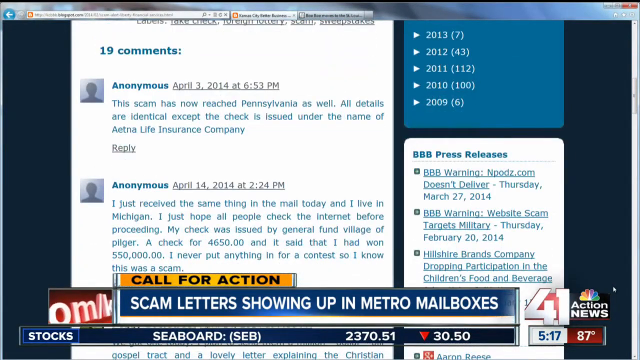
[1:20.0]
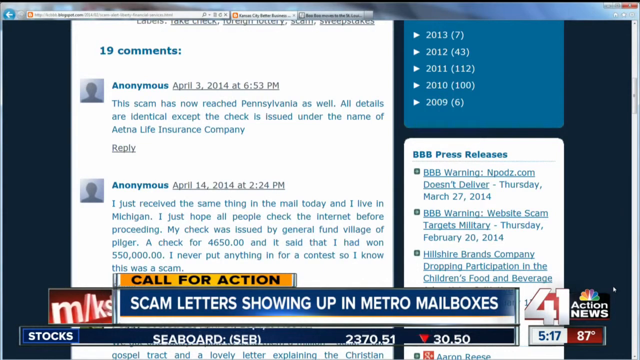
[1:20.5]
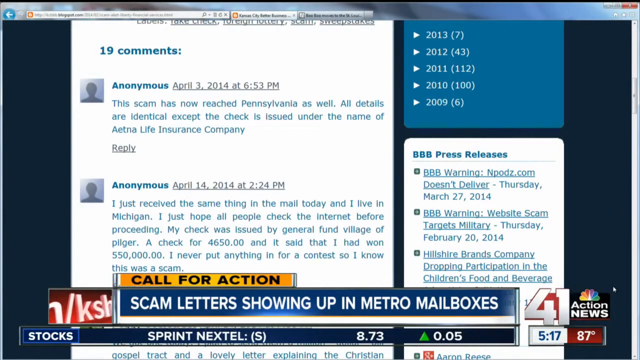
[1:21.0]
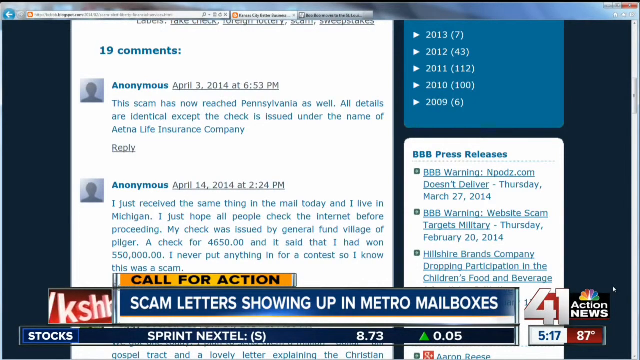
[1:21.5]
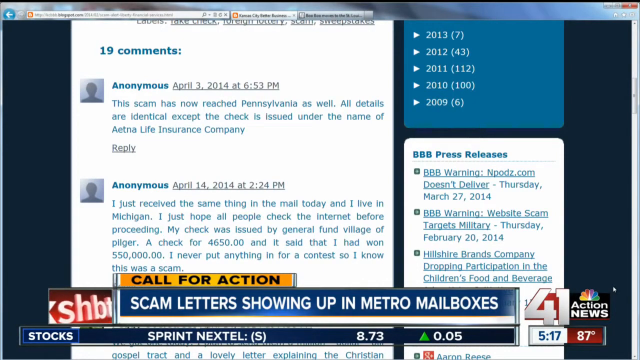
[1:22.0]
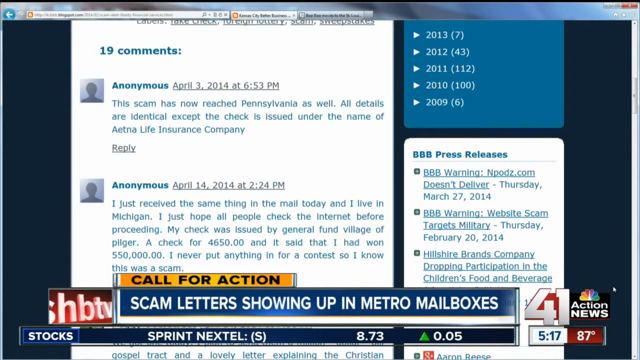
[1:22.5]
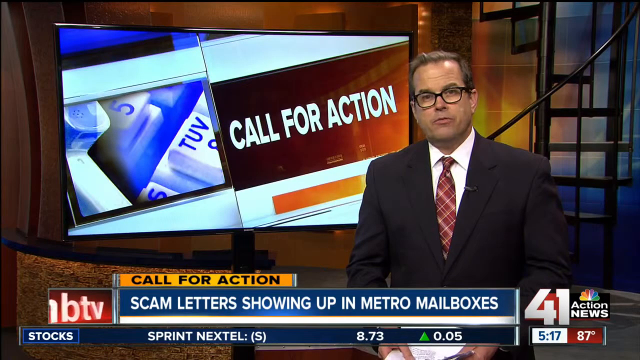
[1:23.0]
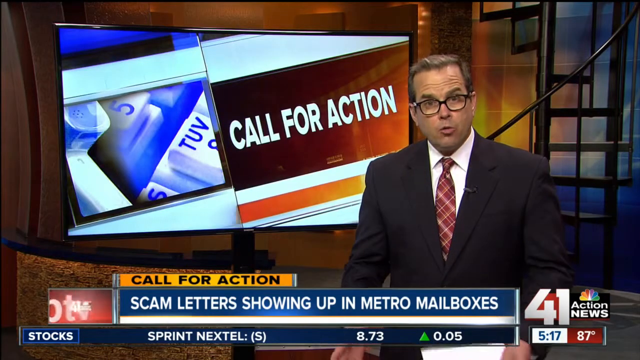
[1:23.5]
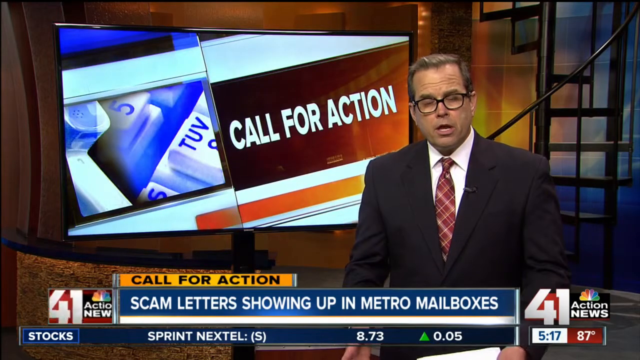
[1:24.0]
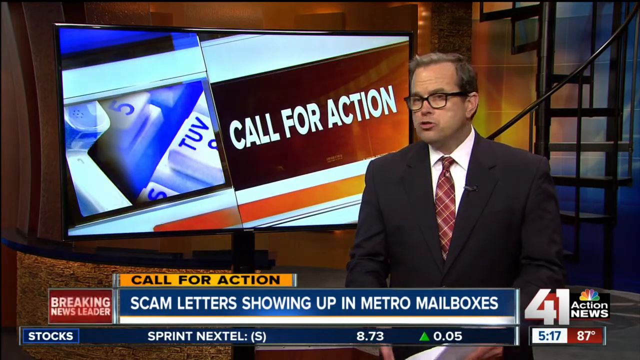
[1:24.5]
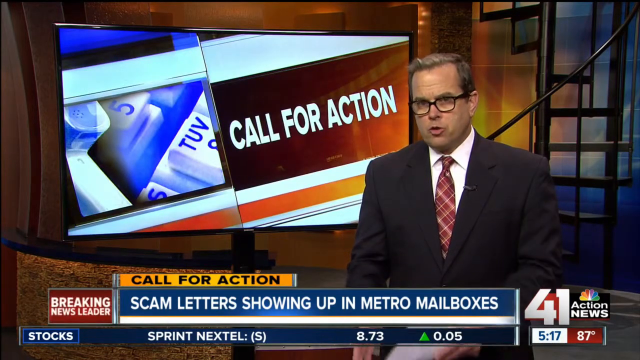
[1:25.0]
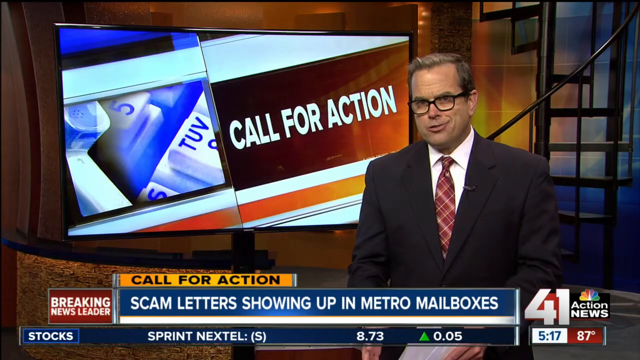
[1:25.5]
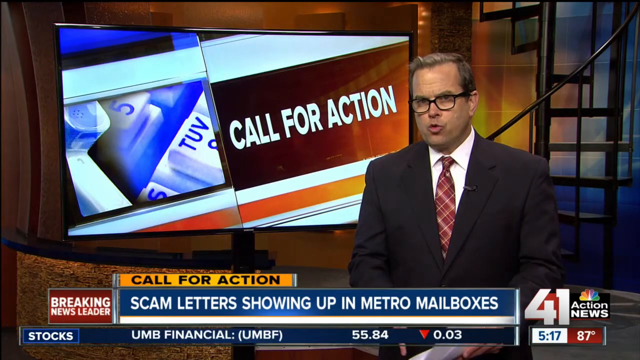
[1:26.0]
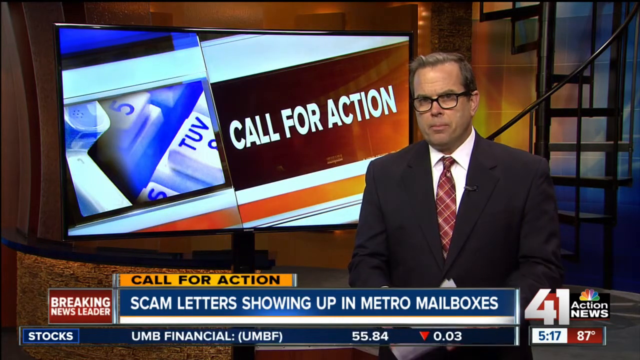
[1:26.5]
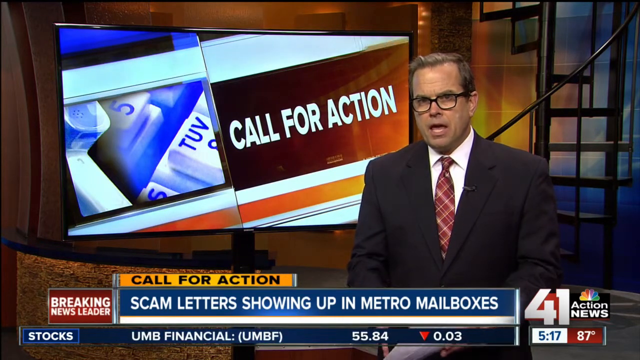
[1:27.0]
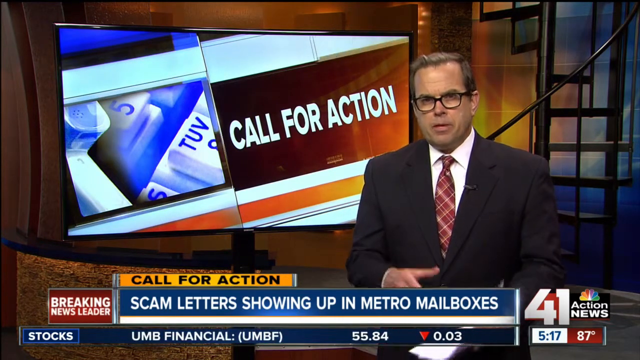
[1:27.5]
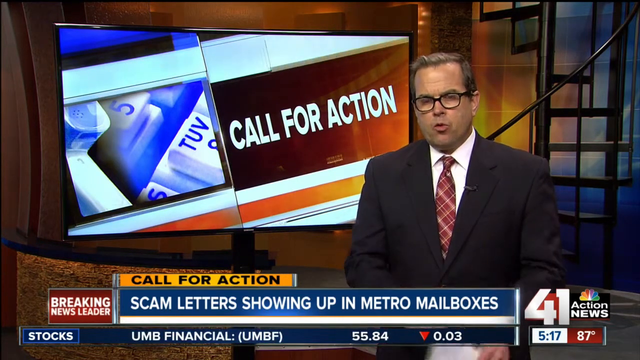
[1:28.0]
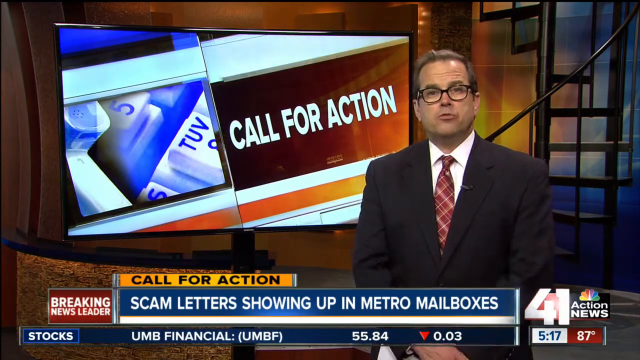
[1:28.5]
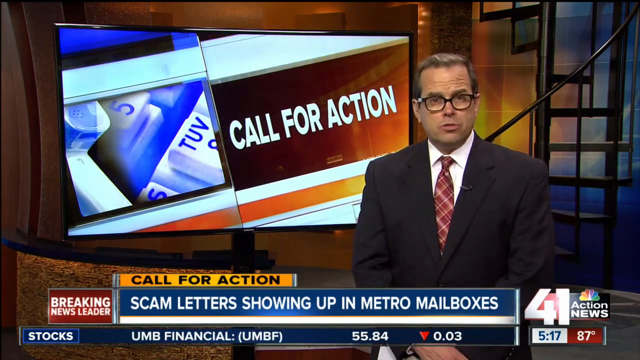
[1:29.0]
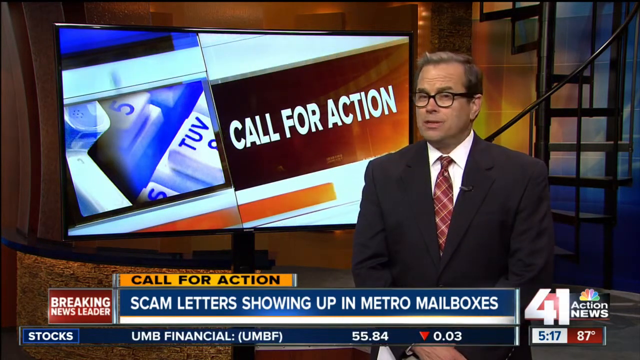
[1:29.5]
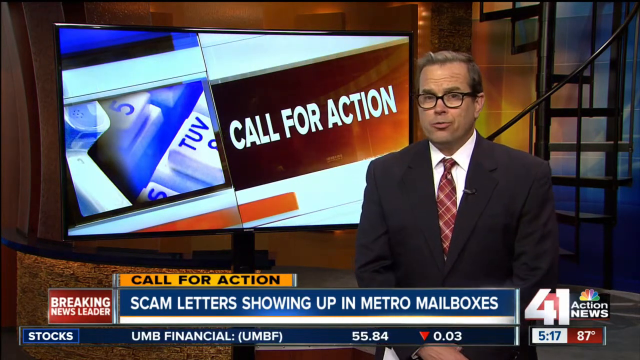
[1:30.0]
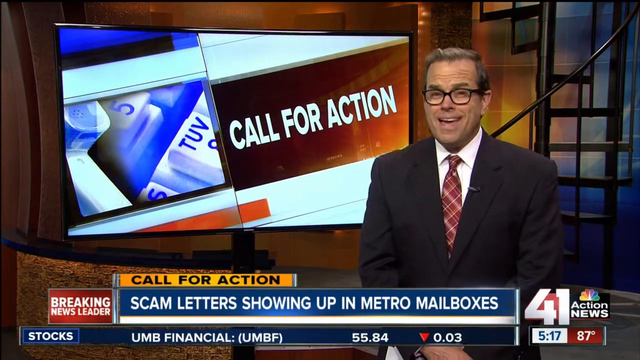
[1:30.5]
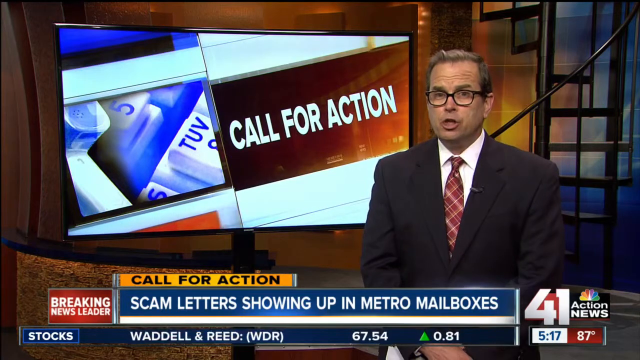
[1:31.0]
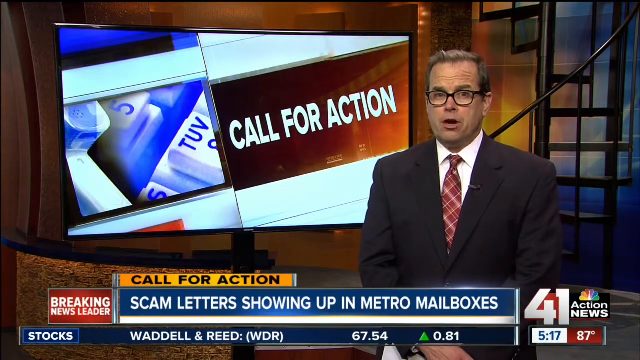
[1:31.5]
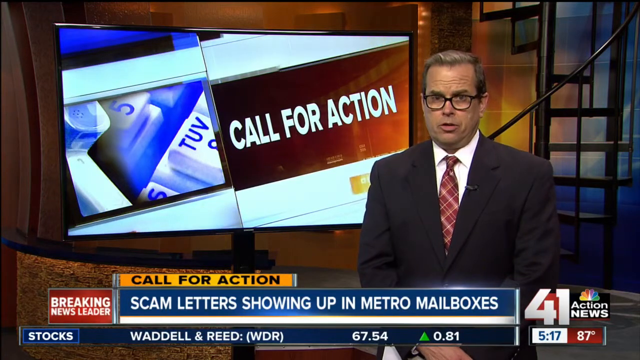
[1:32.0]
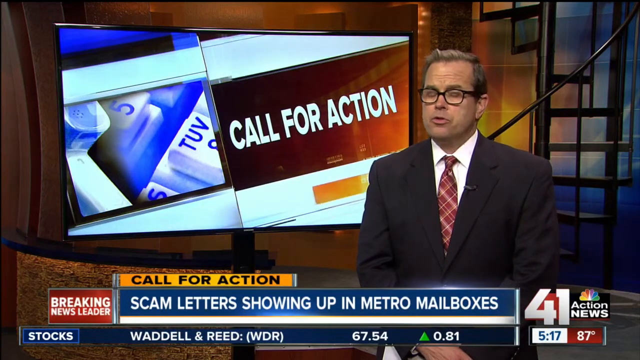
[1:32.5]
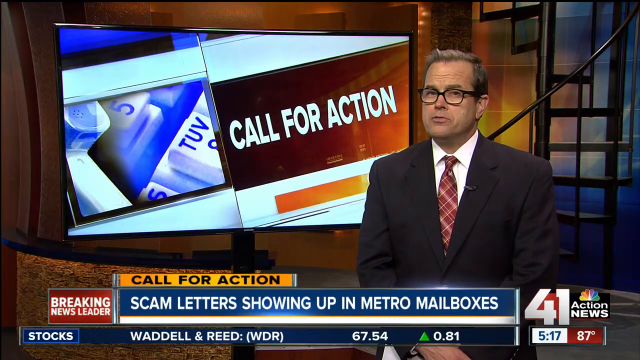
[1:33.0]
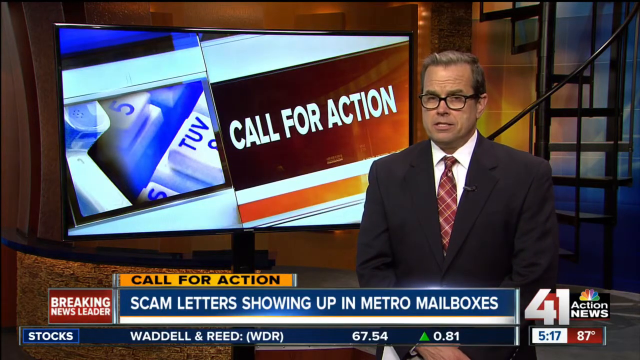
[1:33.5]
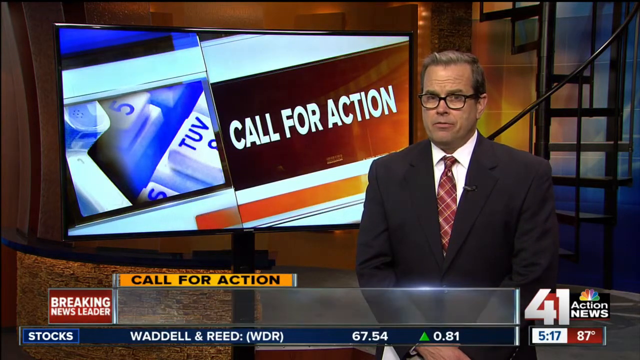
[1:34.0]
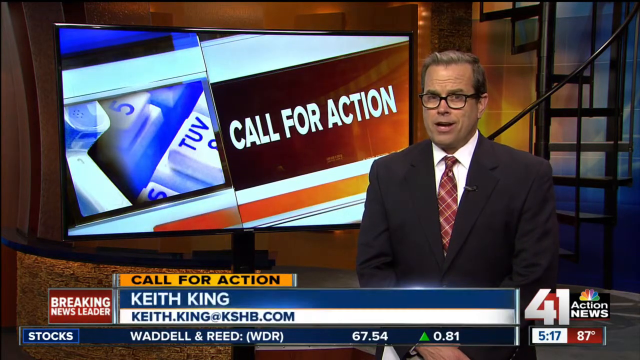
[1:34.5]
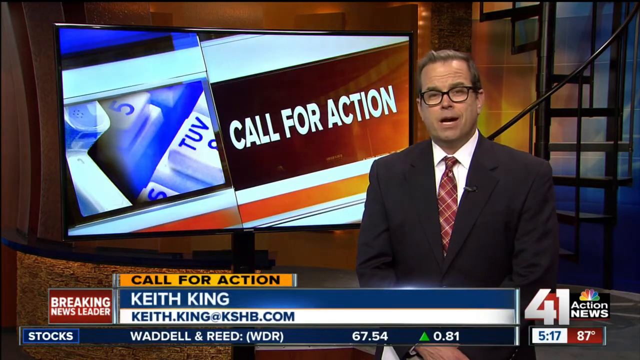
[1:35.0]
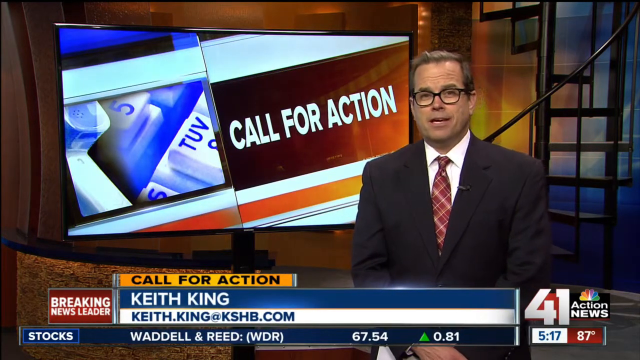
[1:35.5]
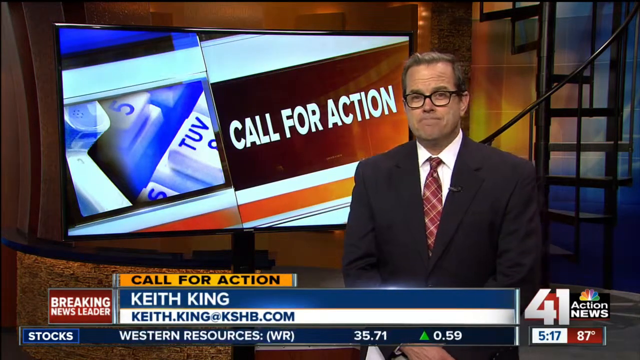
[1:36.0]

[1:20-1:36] A comment section is shown, apparently from a program where elderly people who were scammed are helped with fraud claims. There are 19 comments, and one from an anonymous account says "this scam has now reached Pennsylvania as well. All details are identical except the check." The video then returns to the studio, where the man stands in front of the live screen behind him. He moves slightly to his left, smiles, and the video ends.